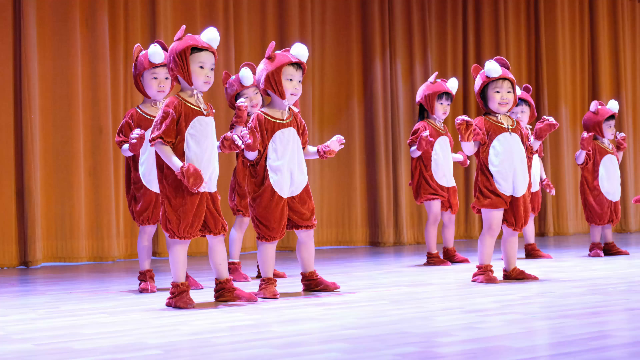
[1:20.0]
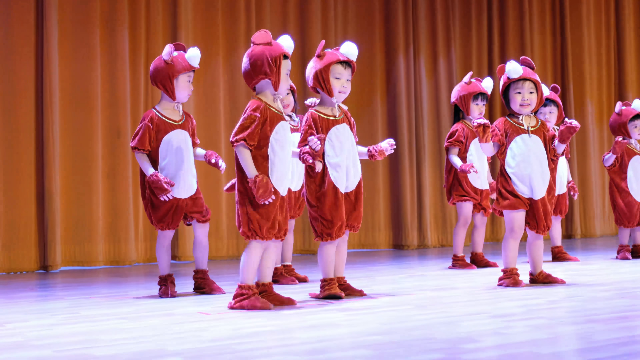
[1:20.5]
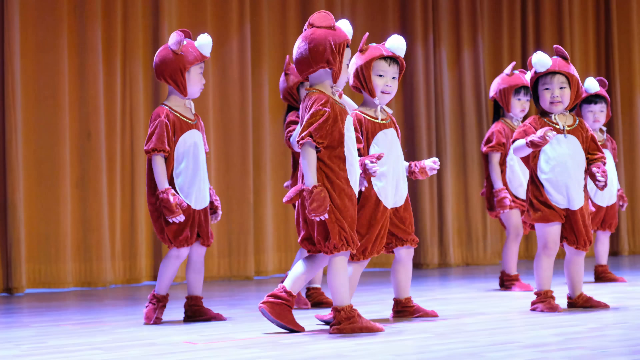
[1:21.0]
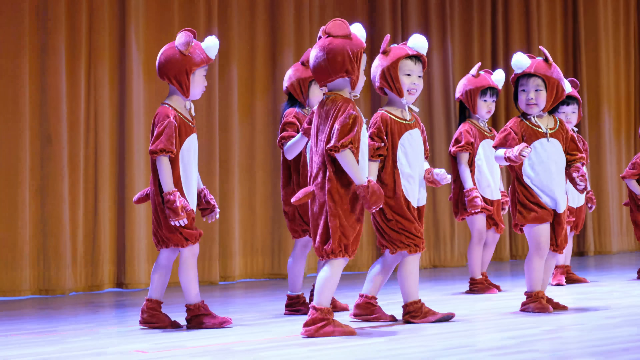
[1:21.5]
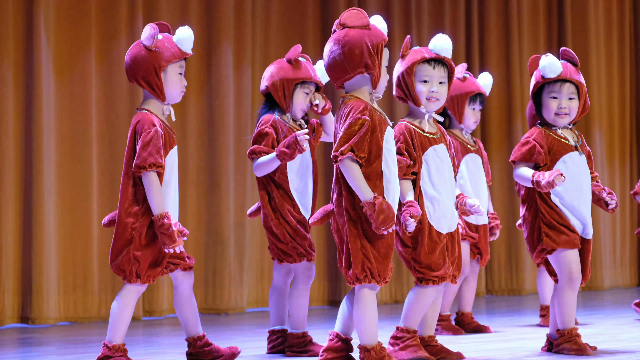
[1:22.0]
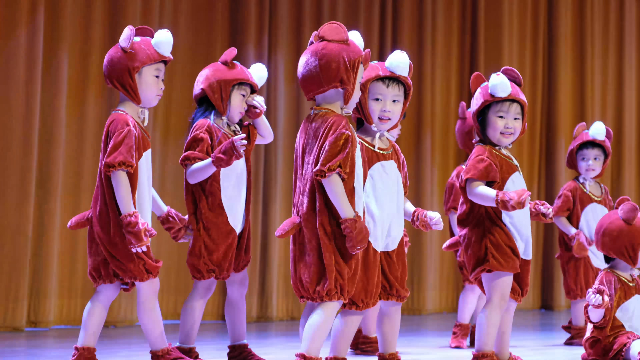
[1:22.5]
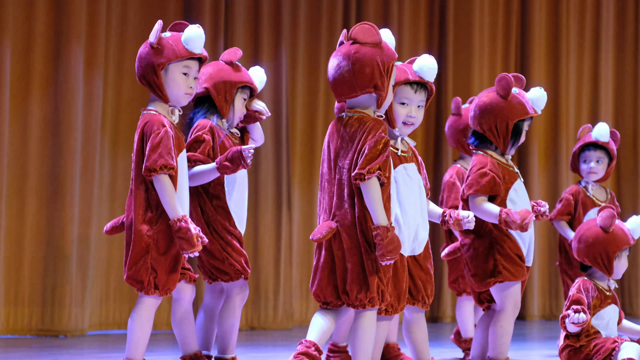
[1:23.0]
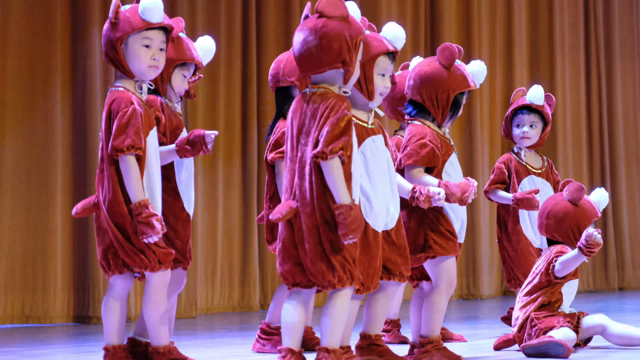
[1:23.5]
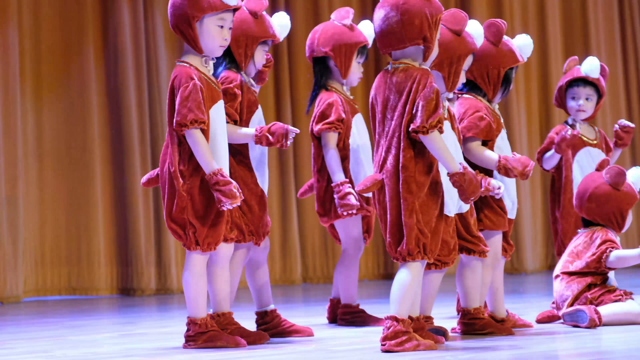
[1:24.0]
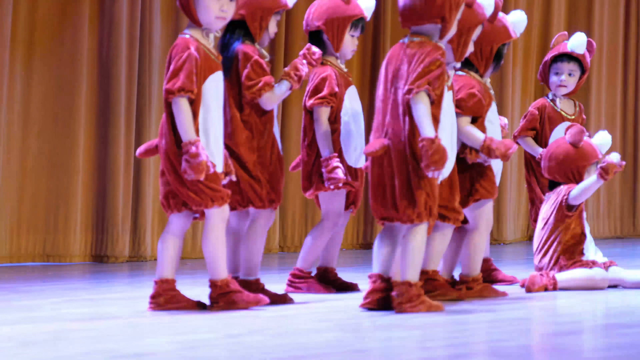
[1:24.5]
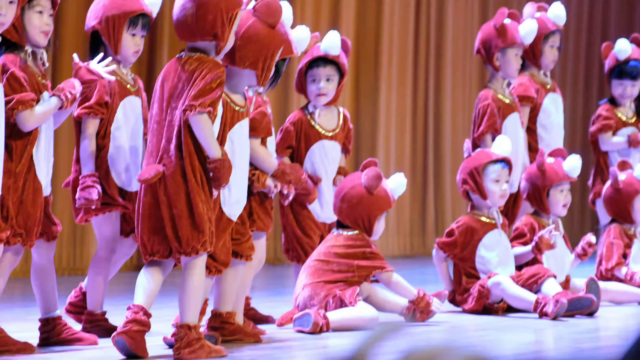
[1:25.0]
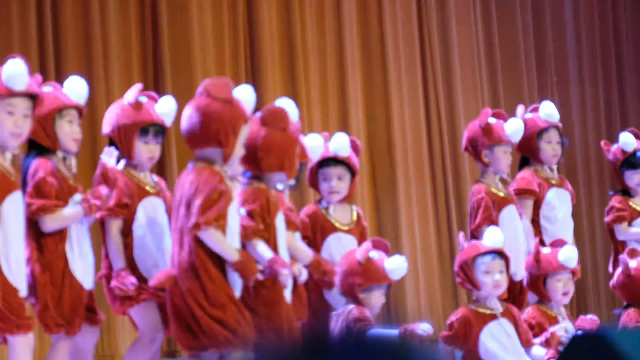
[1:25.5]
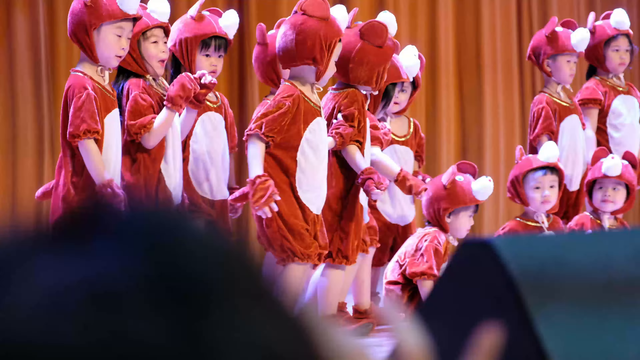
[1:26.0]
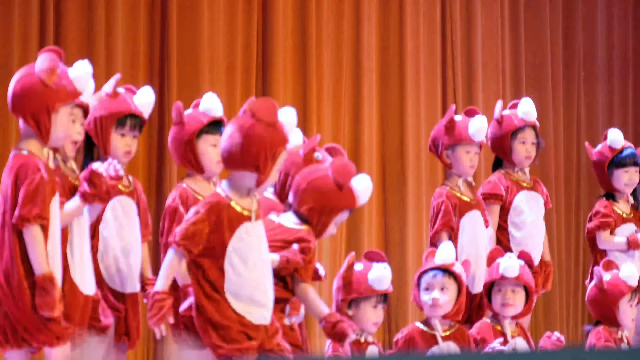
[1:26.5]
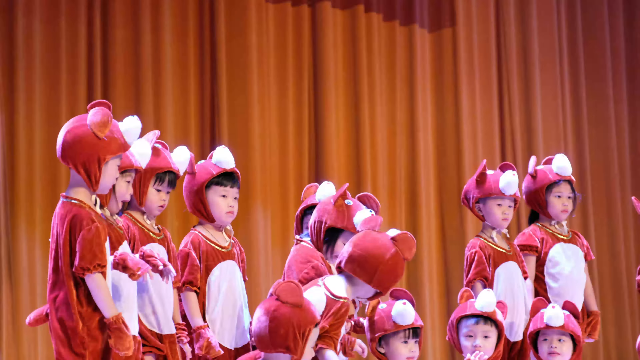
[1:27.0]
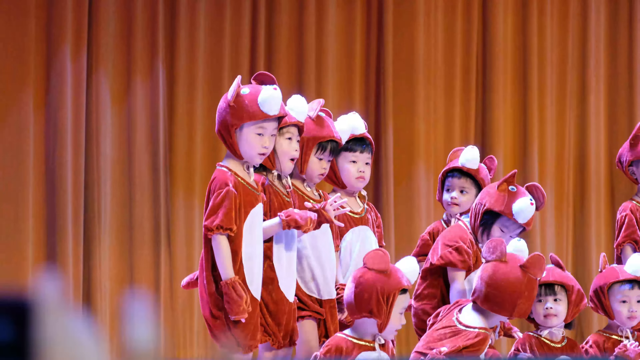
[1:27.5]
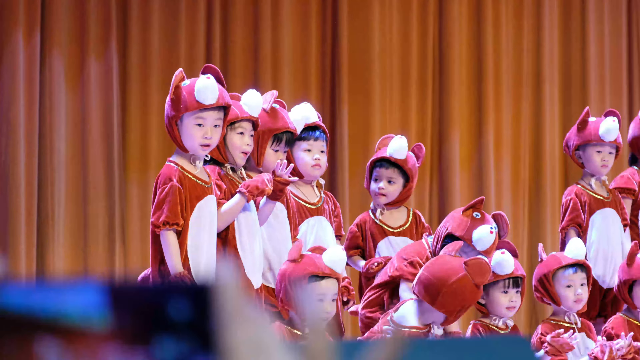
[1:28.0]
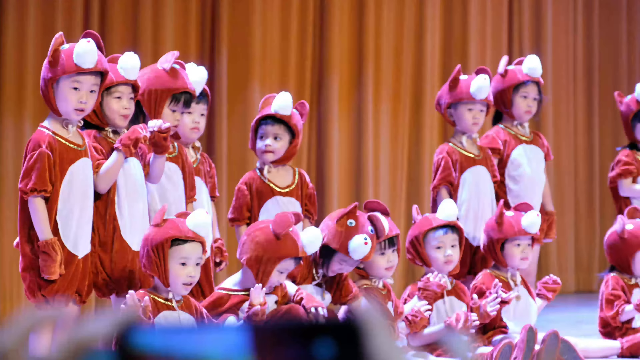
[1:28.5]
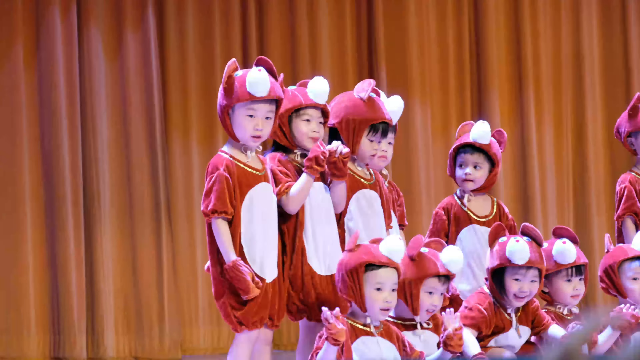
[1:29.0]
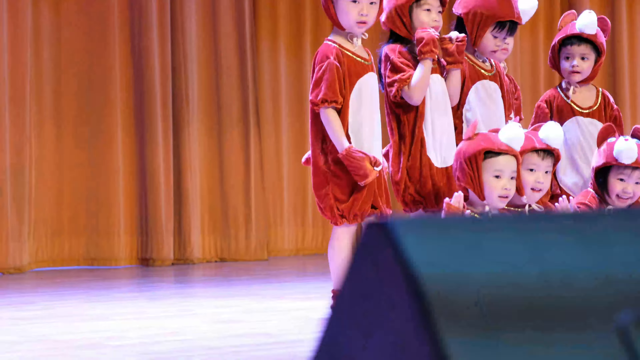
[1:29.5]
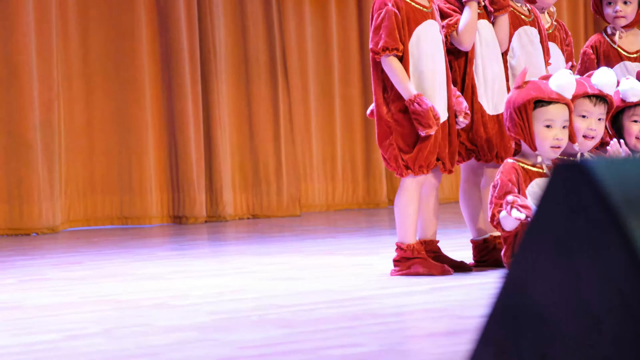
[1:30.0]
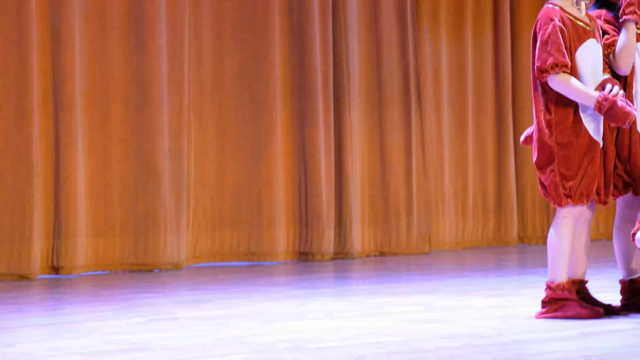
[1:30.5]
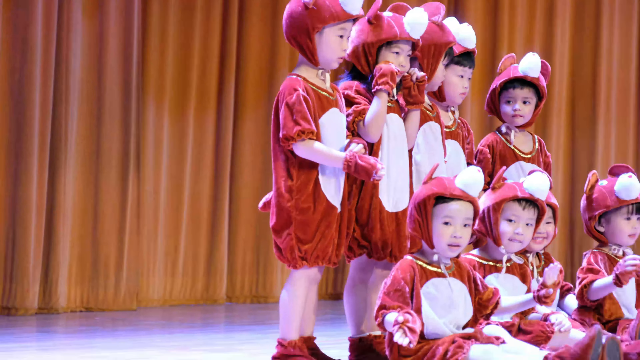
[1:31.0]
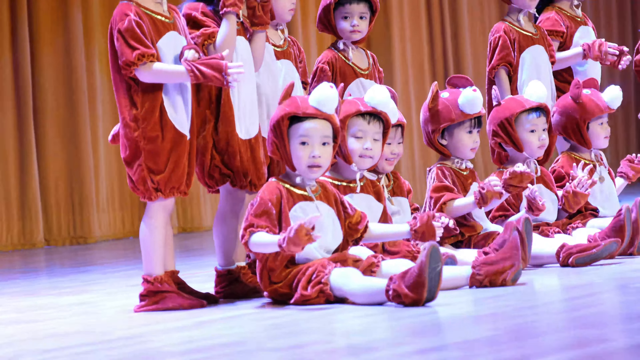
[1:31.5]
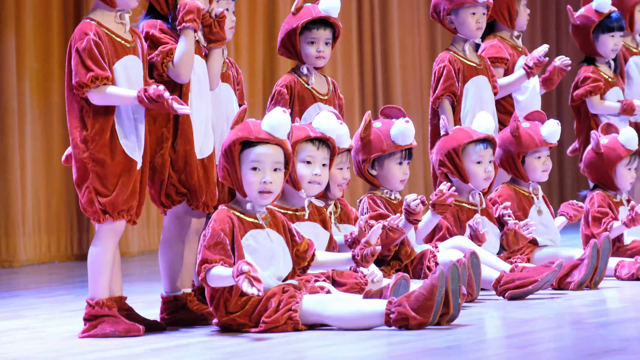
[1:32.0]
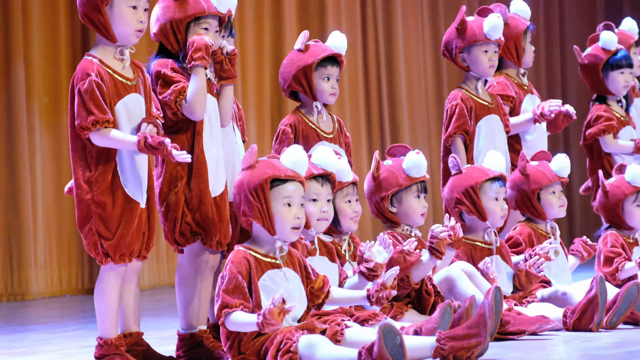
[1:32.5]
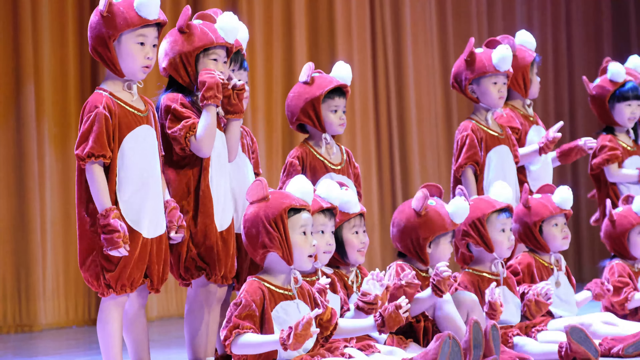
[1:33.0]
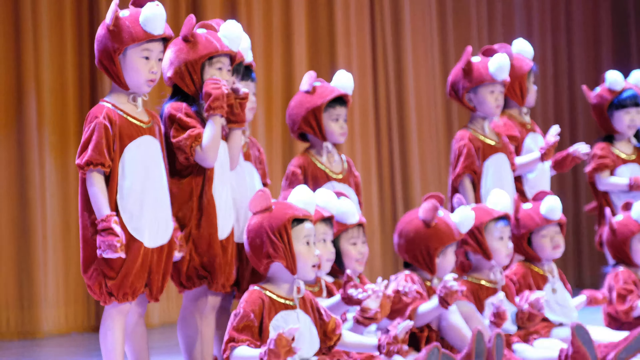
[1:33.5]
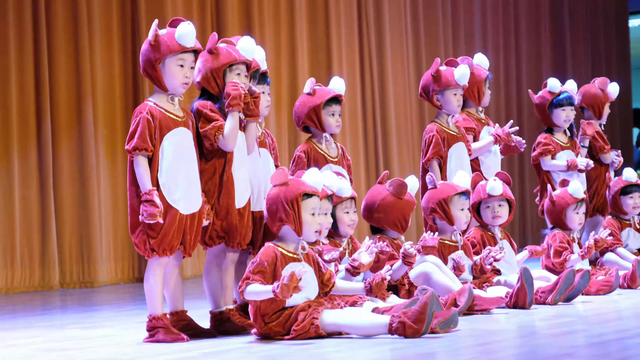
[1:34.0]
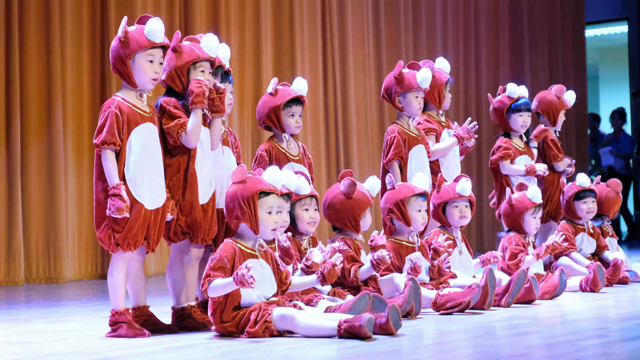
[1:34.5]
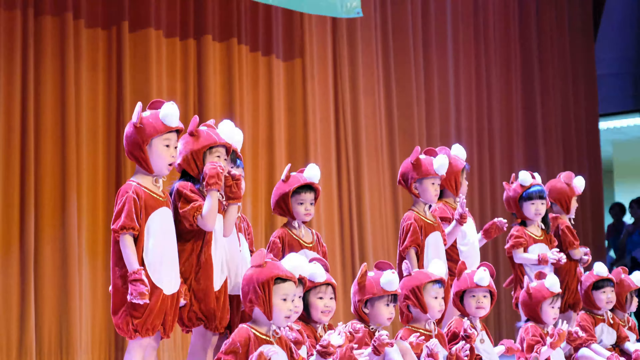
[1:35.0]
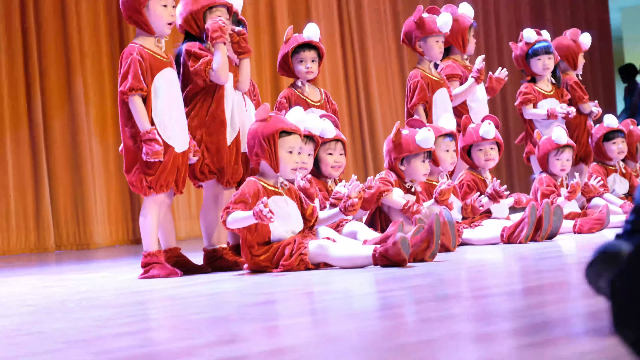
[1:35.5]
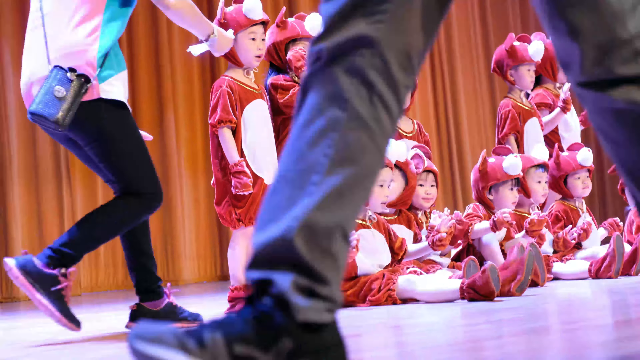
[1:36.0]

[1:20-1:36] The kids apparently wrap up their dinosaur dance routine. They stop moving and start walking off toward the left of the stage. Some of them seem to sit down right on the stage floor while a few others stay standing for a bit, looking around as if unsure what to do next. The camera gets noticeably shakier, zooming and readjusting a lot, as if the person filming is trying to keep the one or two kids they have been focused on in frame. At the end, the kids face the audience and start waving goodbye.